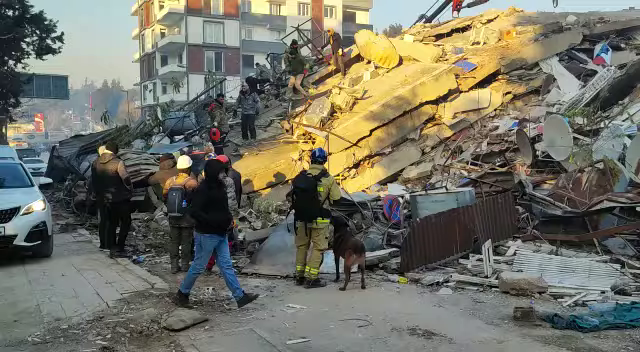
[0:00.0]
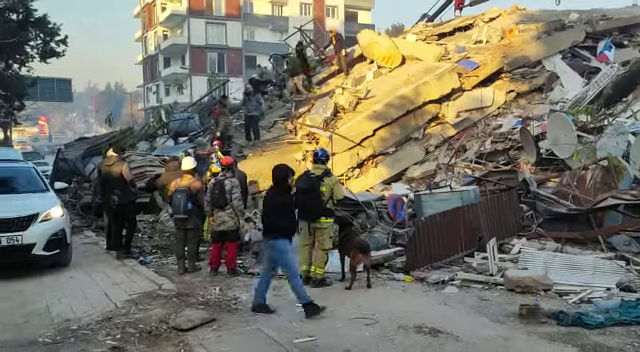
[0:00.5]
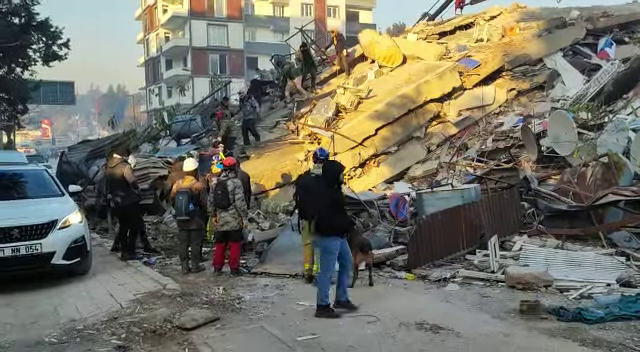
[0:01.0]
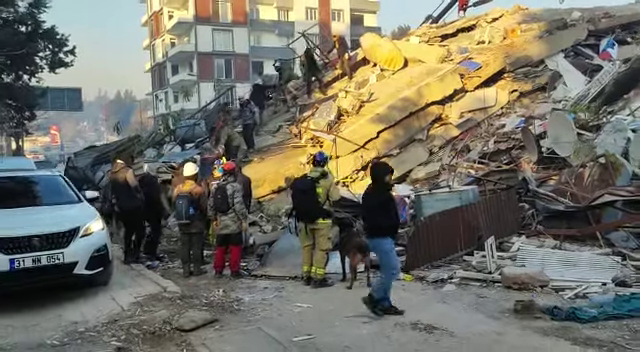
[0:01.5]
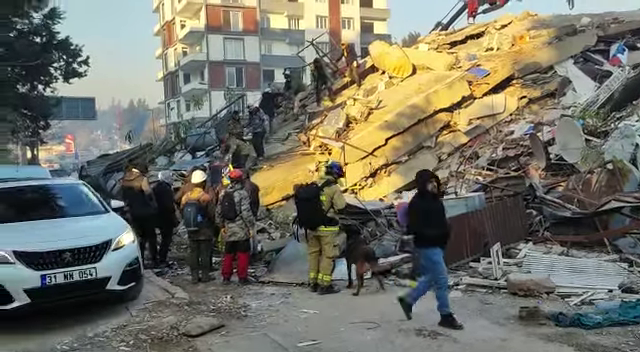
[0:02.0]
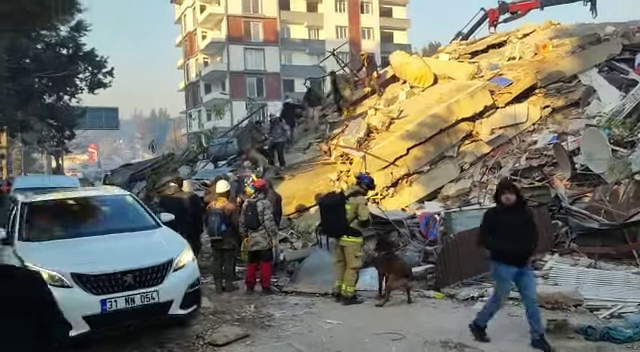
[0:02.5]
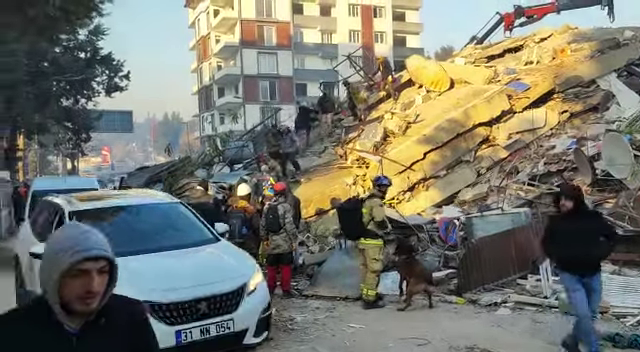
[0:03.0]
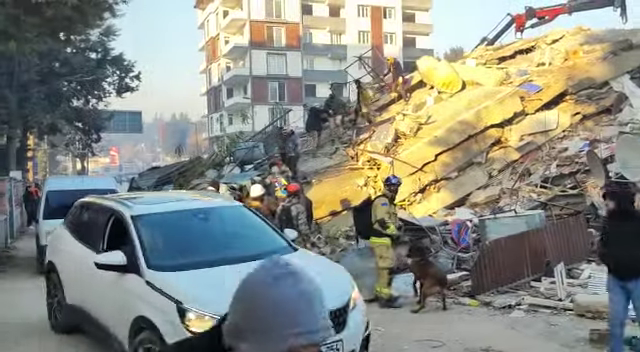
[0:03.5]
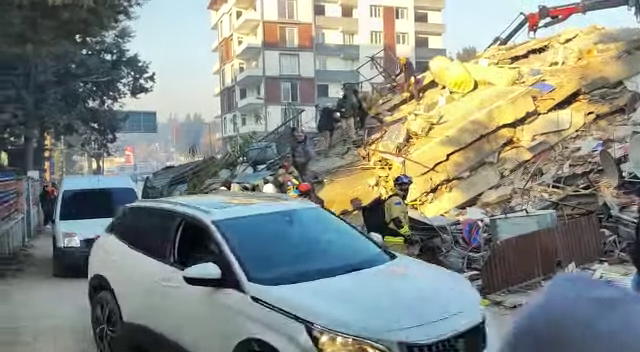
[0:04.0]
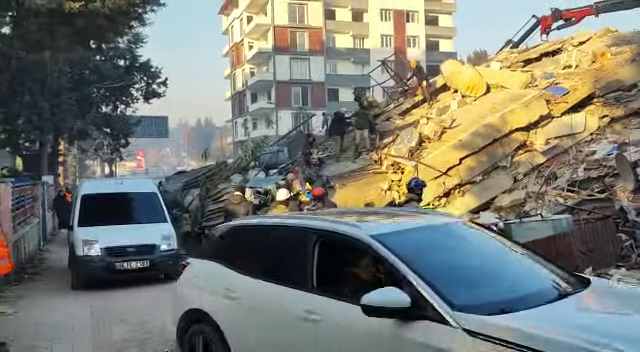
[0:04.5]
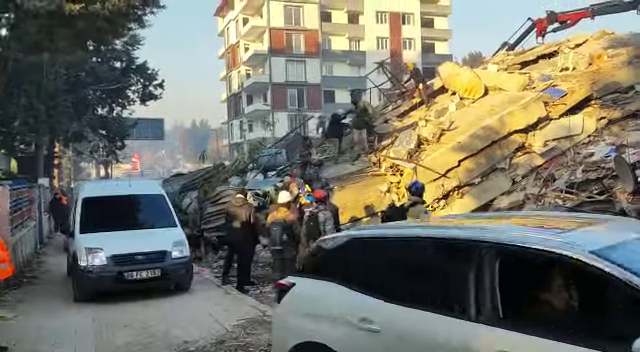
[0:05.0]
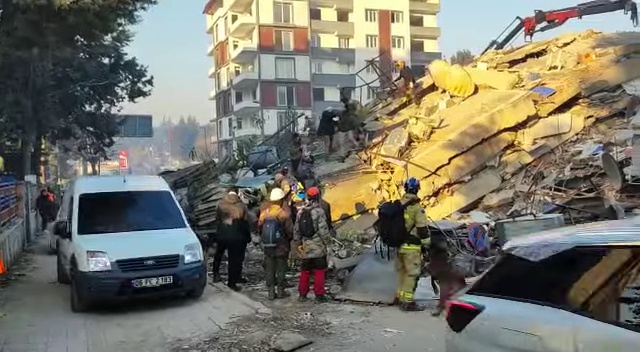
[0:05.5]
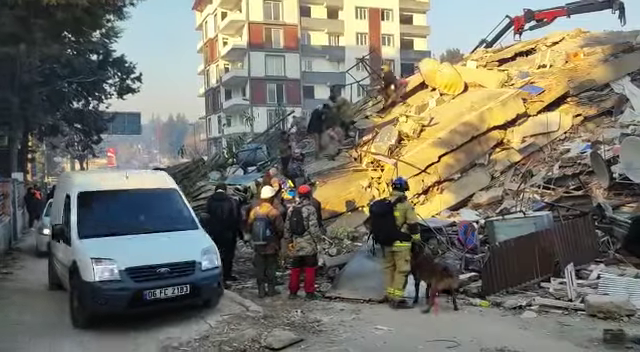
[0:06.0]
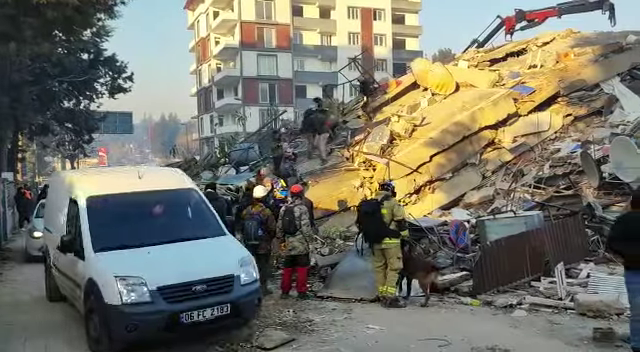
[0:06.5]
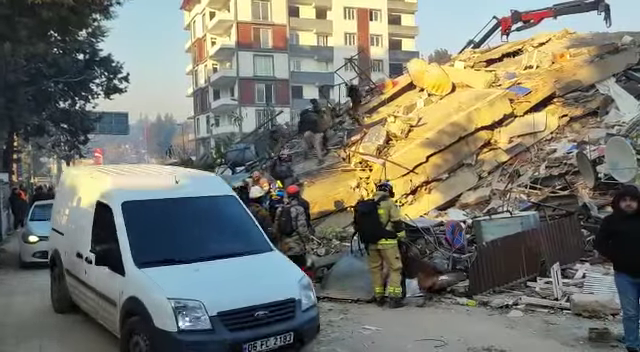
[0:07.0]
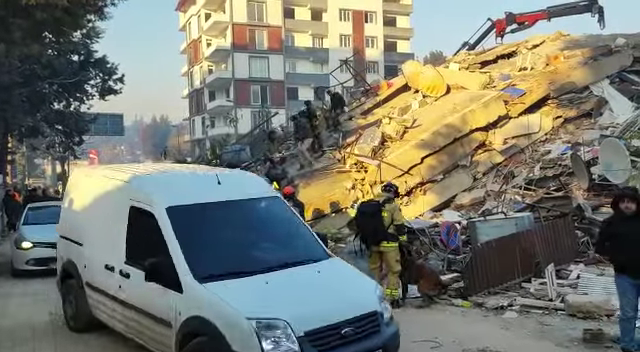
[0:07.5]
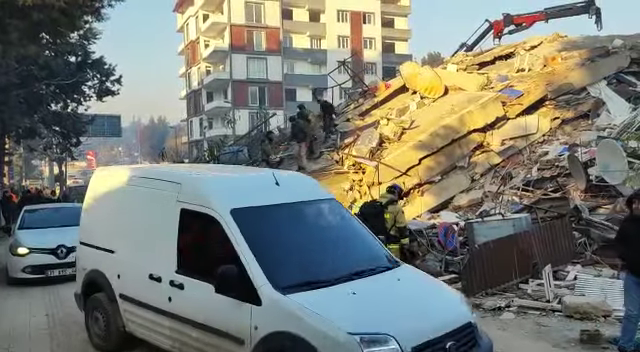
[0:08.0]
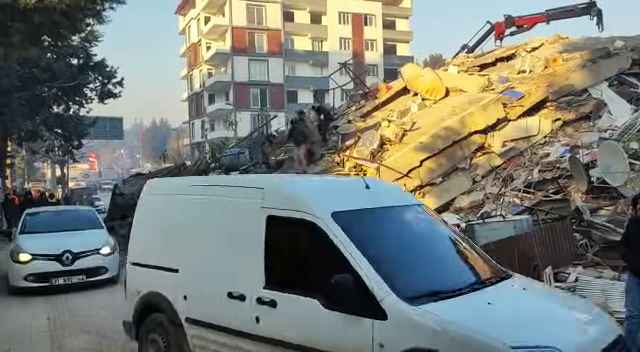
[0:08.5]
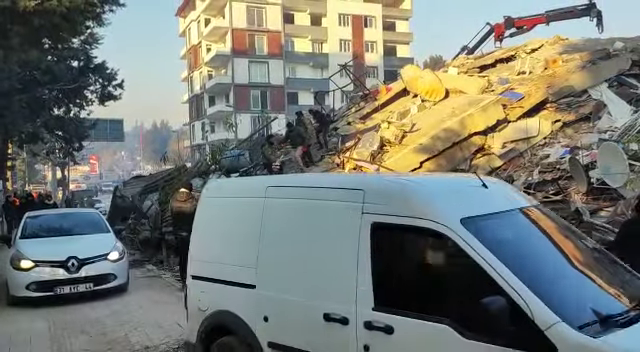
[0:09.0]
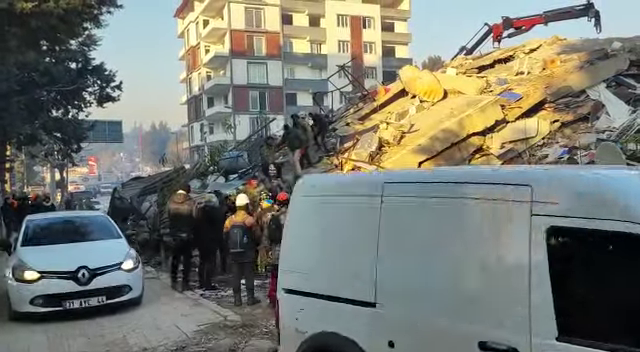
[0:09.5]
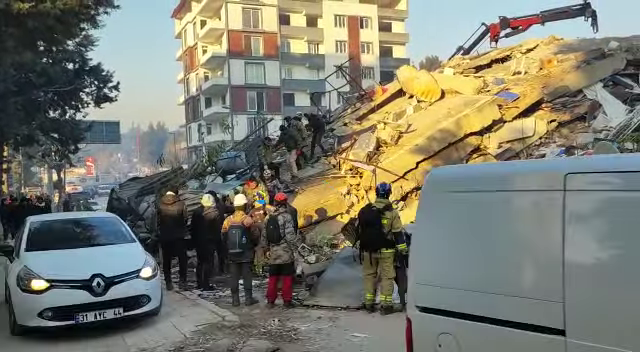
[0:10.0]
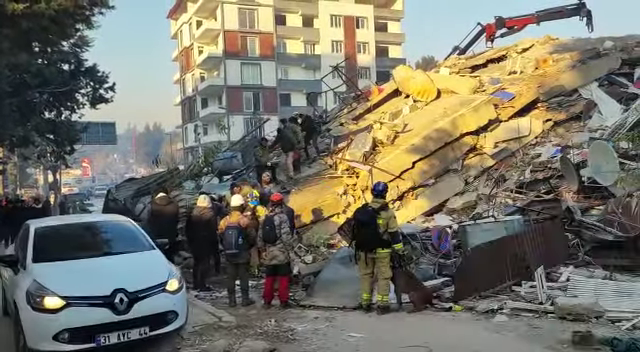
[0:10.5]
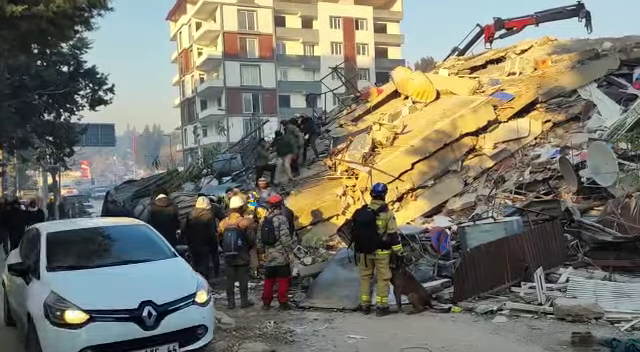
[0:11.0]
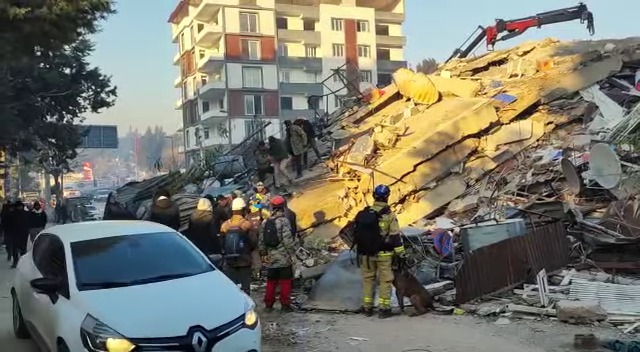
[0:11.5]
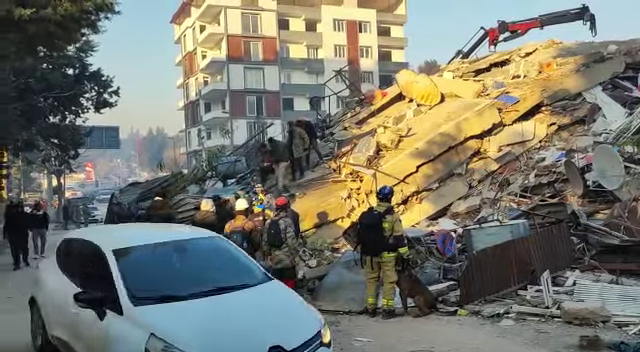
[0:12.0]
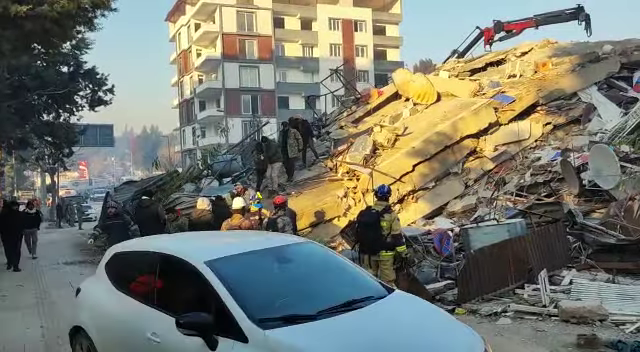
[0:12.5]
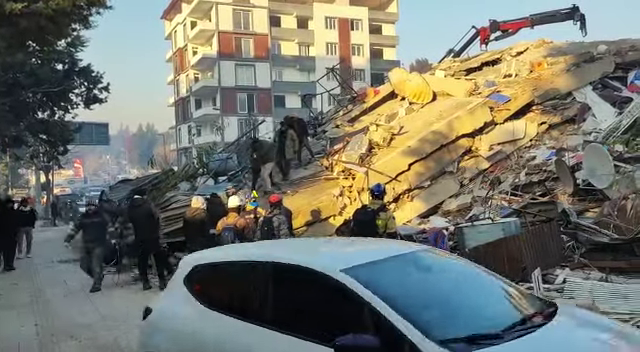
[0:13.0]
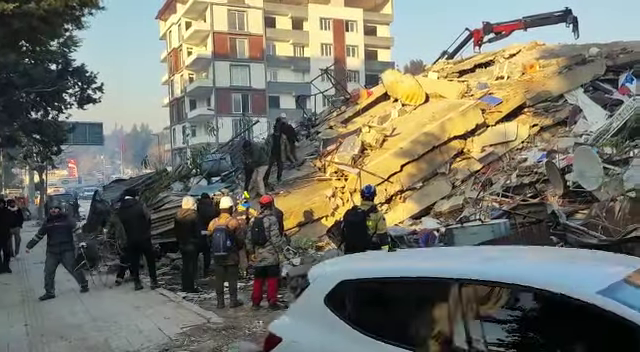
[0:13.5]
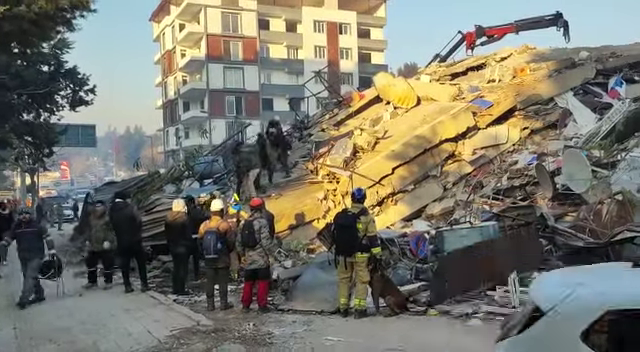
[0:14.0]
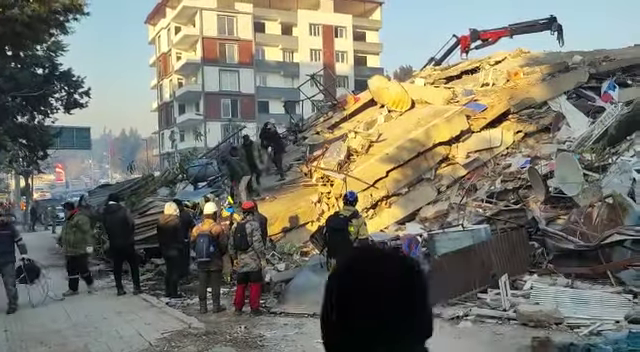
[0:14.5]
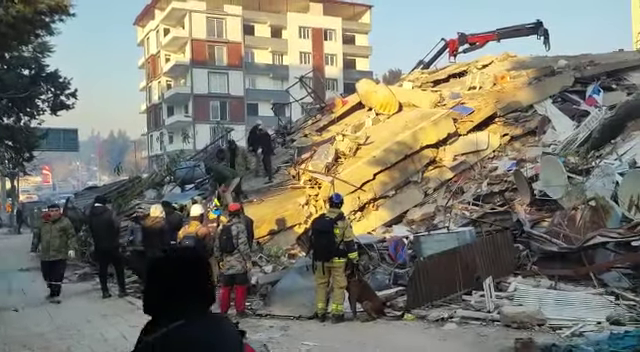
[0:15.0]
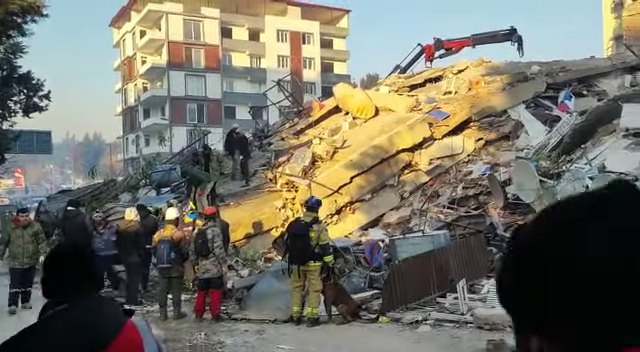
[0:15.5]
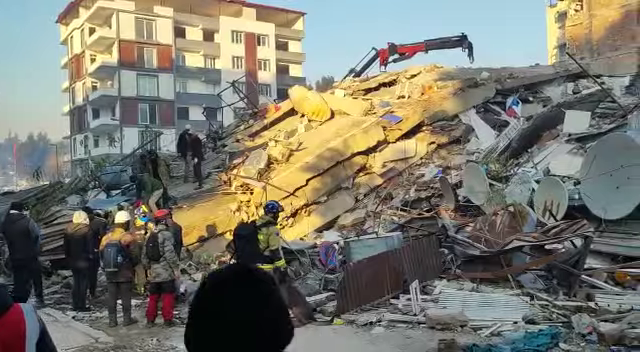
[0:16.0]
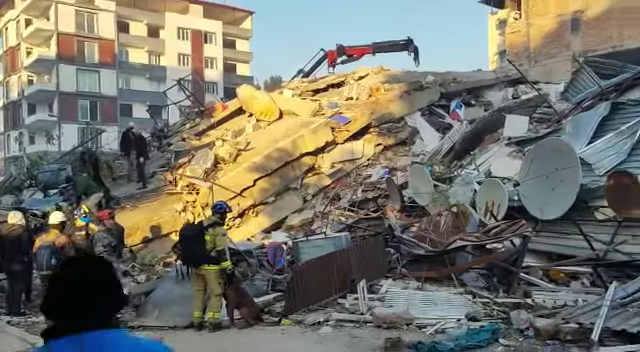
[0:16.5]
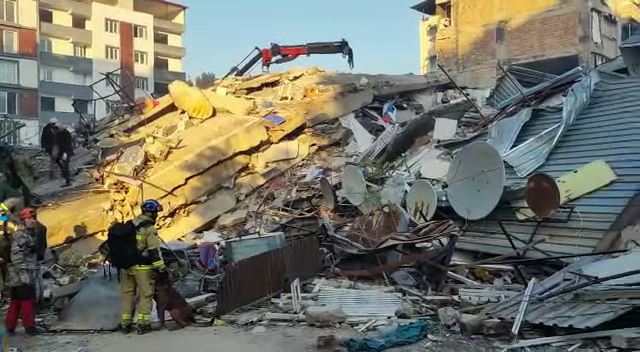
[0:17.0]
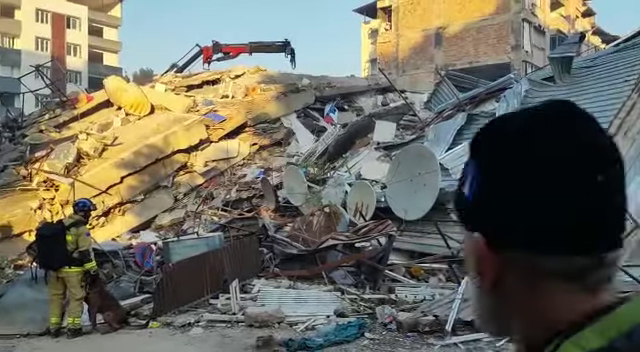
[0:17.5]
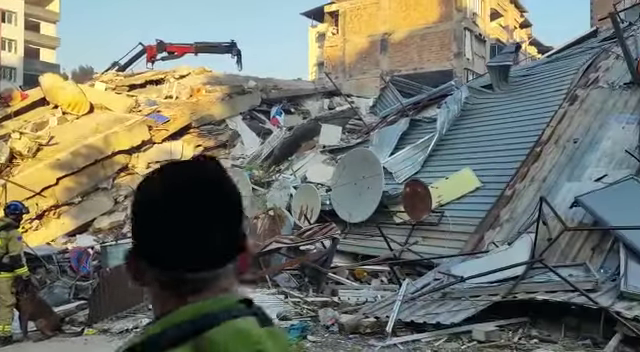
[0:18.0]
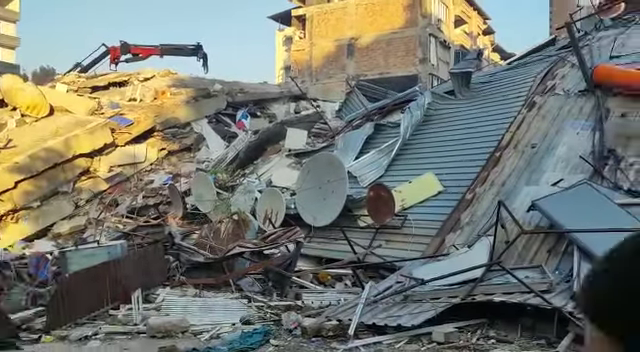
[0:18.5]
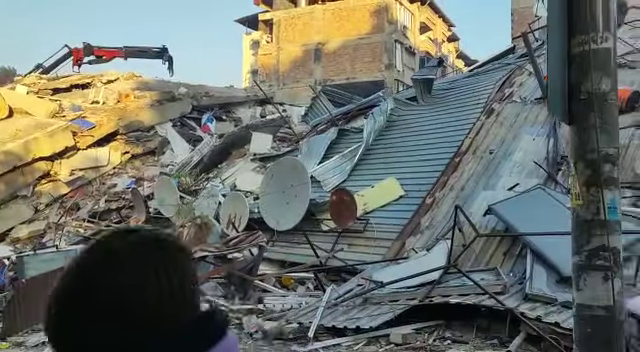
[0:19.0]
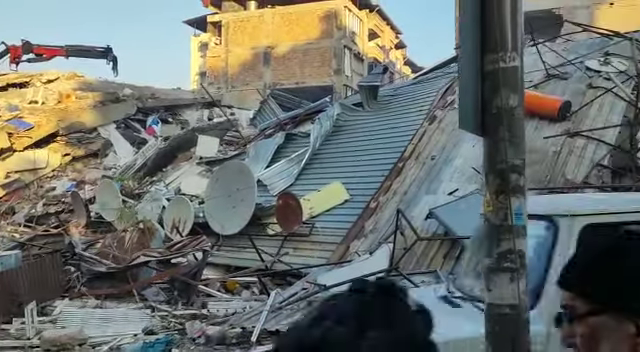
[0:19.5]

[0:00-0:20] The video opens on what appears to be a collapsed apartment building. Rubble appears to be everywhere, ranging from concrete to items such as satellite dishes, clothing, toys, furniture such as couches, and window curtains. A dog stands near what appears to be a firefighter. People surround the damaged rubble and are on it, trying to scavenge items and looking for people. On the far left there appears to be a small lane that vehicles are driving through. A large building is still standing tall under a bright blue sky, and machinery is visible. As the camera pans right, more debris comes into view, including large metal sheets, clothing and equipment. Some spectators look on as they walk by, while others appear to be walking through the rubble.